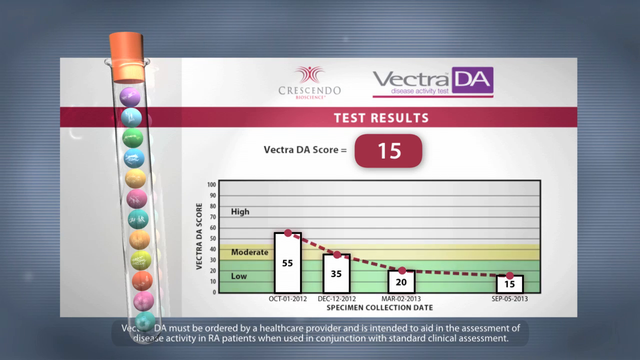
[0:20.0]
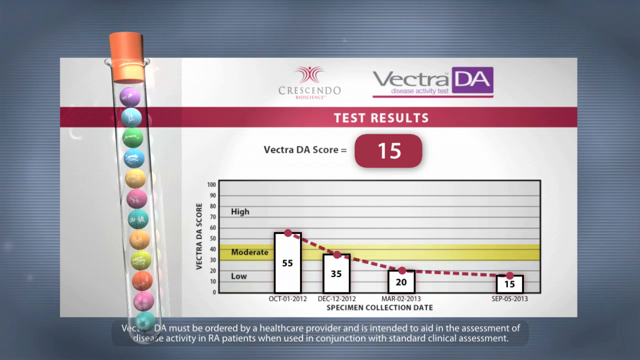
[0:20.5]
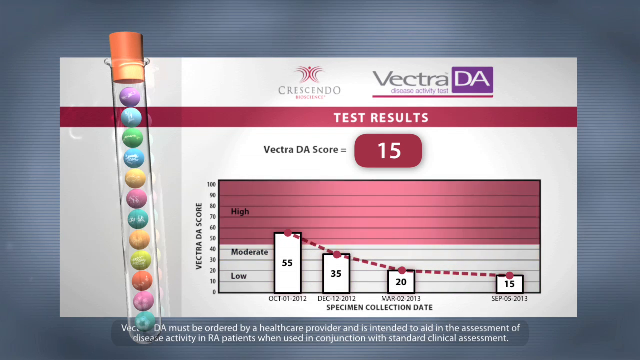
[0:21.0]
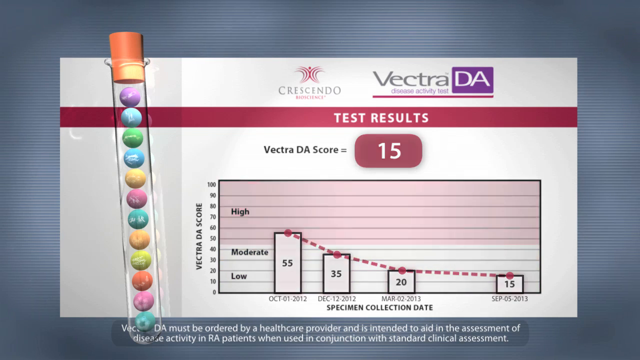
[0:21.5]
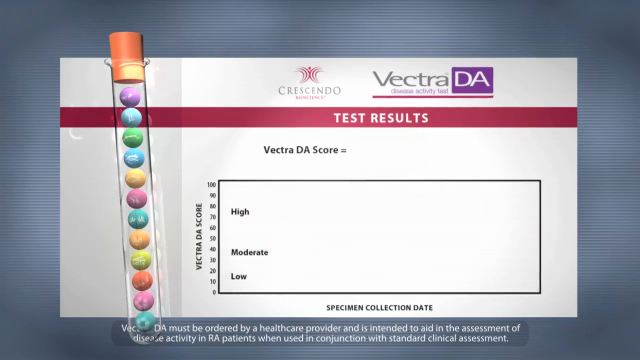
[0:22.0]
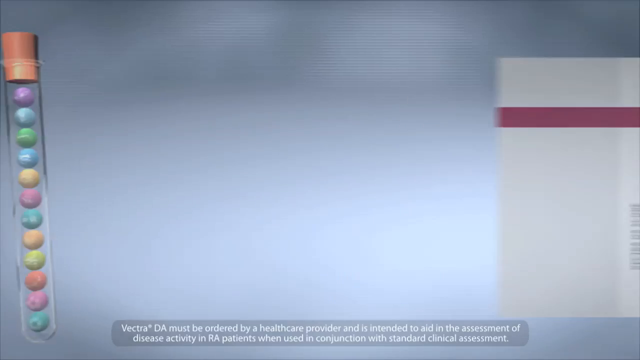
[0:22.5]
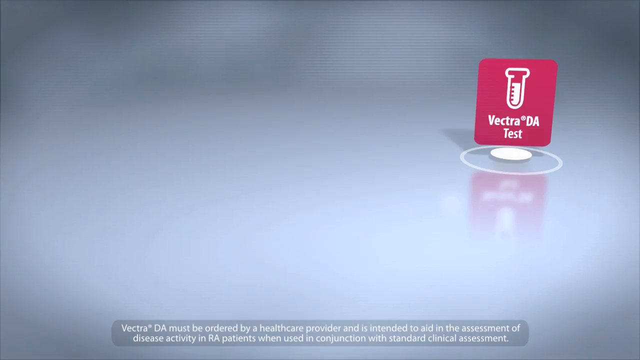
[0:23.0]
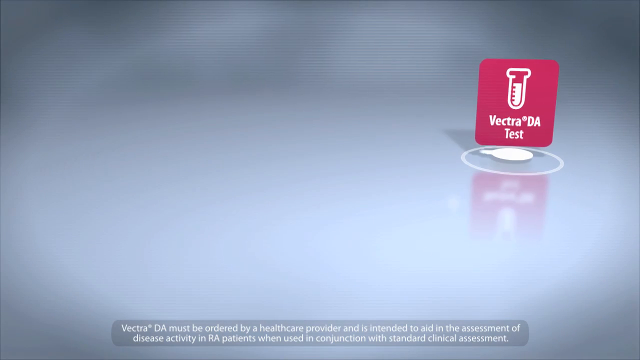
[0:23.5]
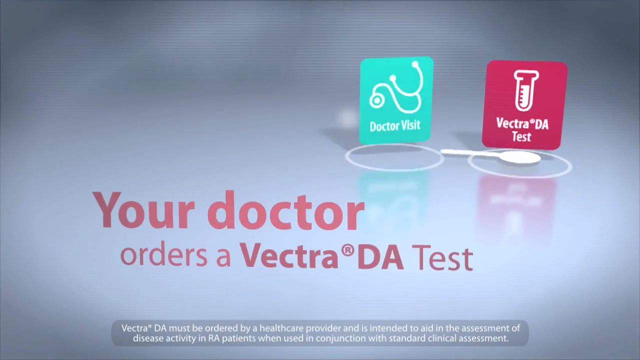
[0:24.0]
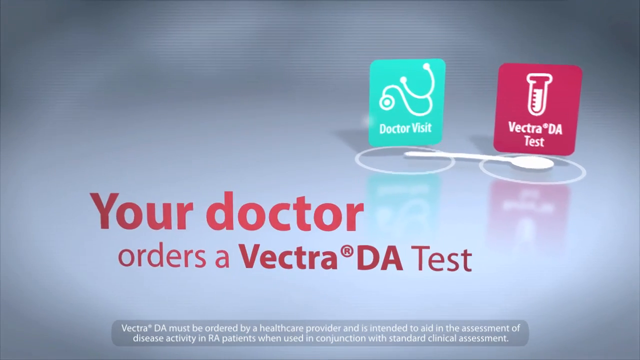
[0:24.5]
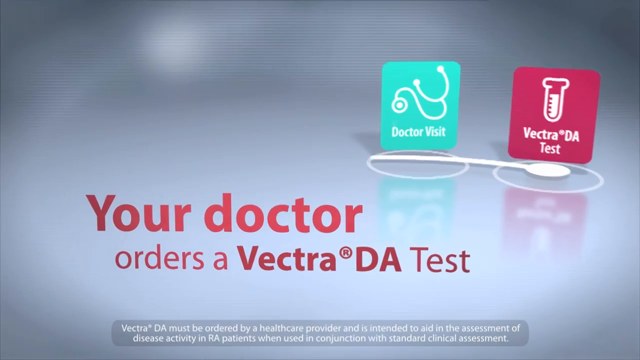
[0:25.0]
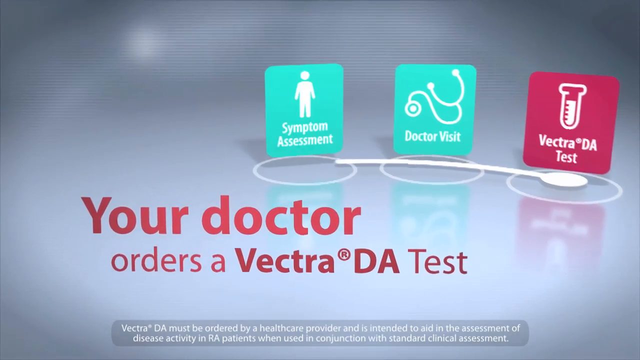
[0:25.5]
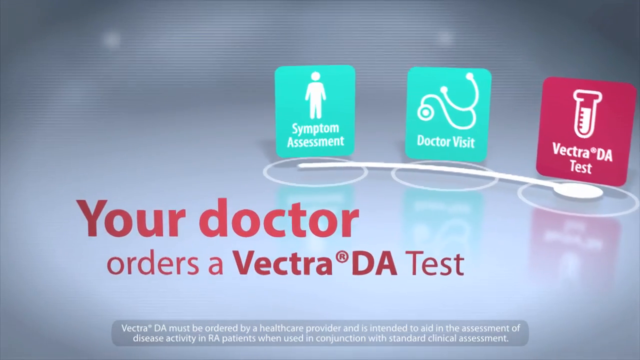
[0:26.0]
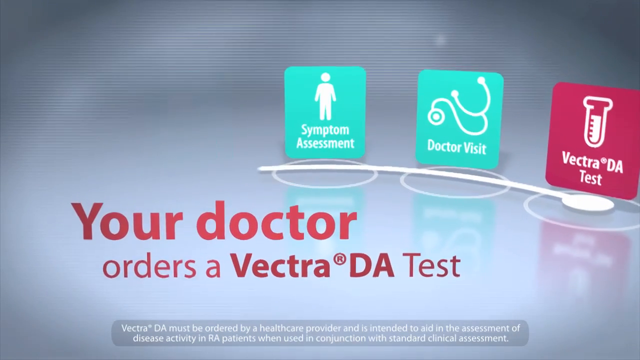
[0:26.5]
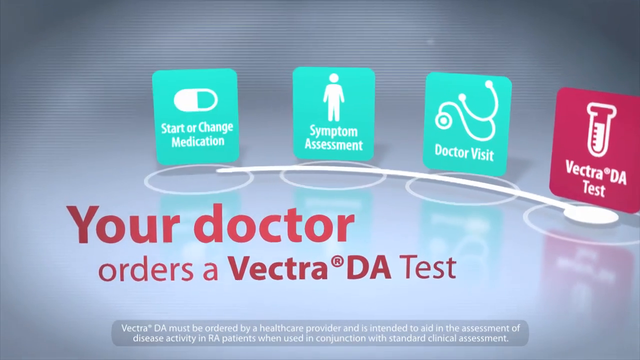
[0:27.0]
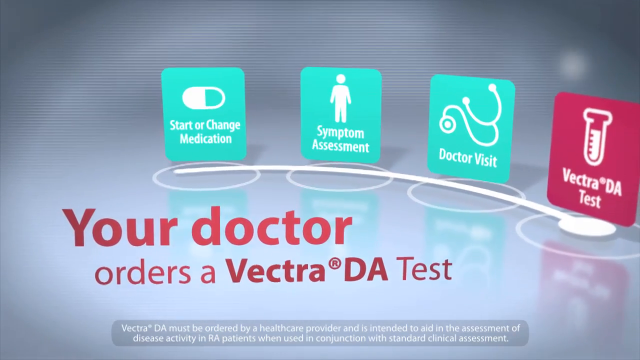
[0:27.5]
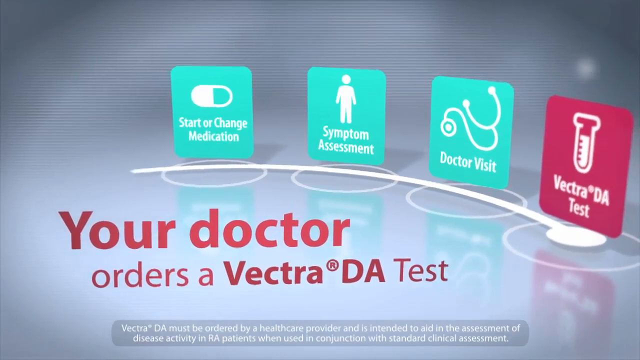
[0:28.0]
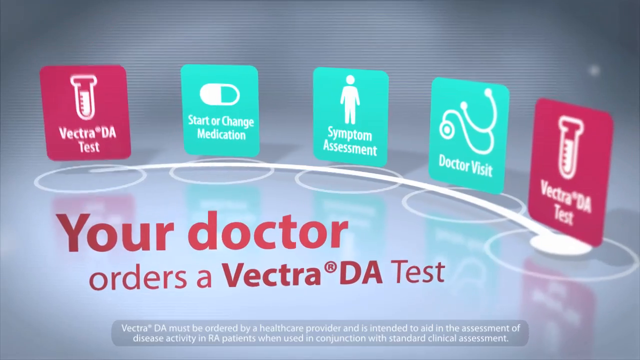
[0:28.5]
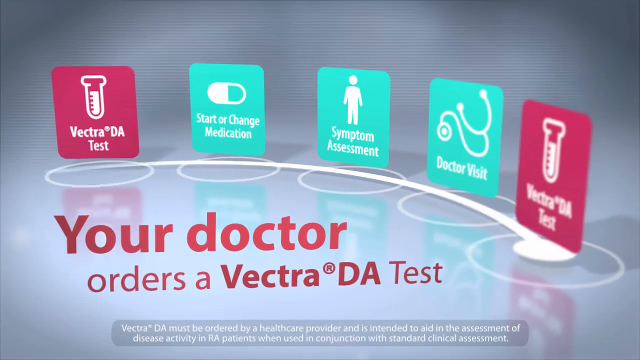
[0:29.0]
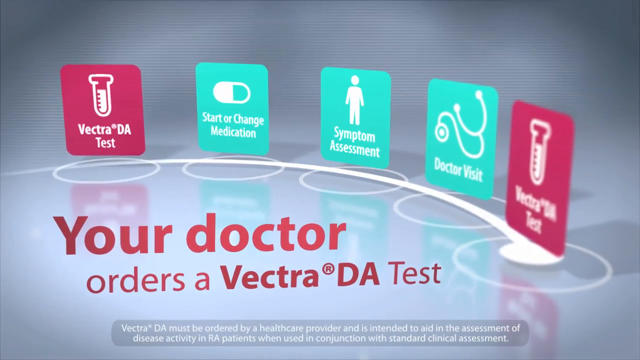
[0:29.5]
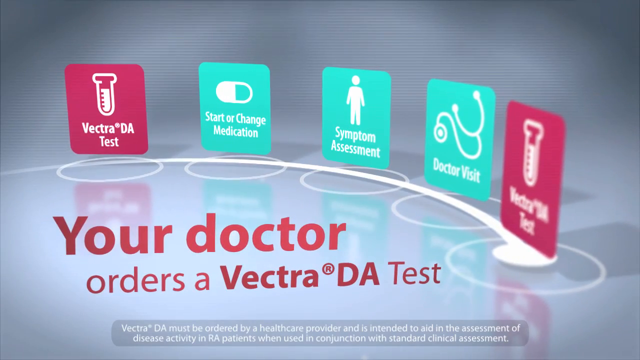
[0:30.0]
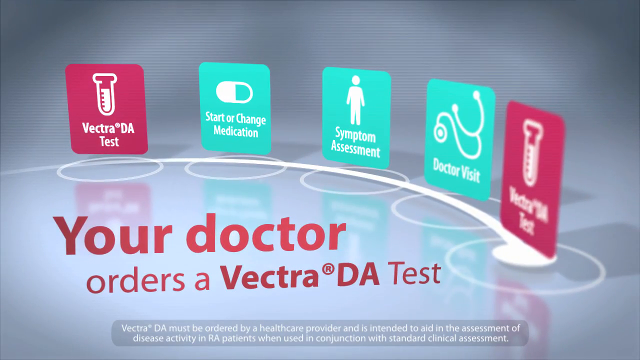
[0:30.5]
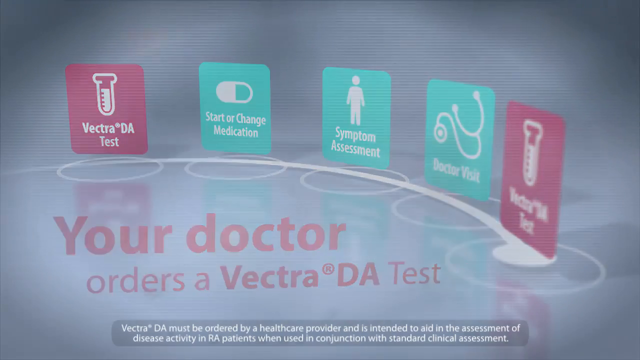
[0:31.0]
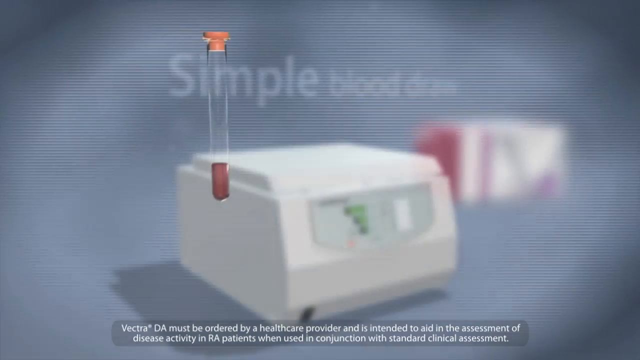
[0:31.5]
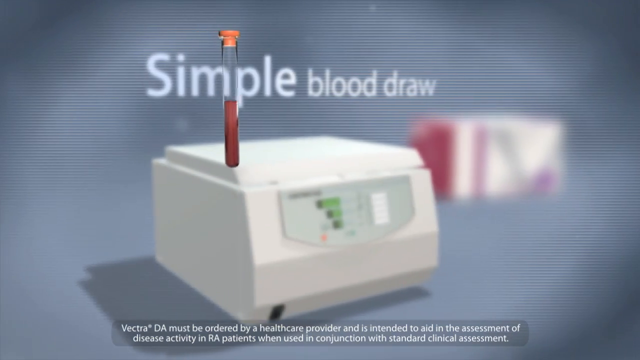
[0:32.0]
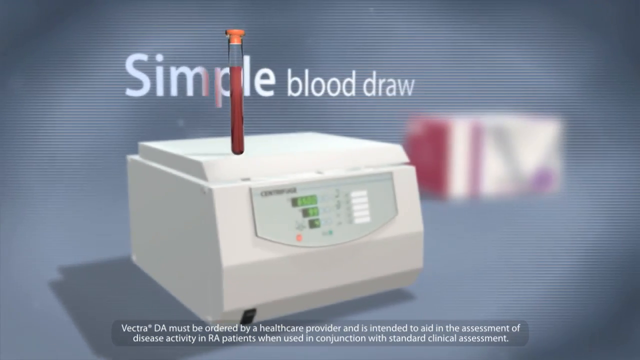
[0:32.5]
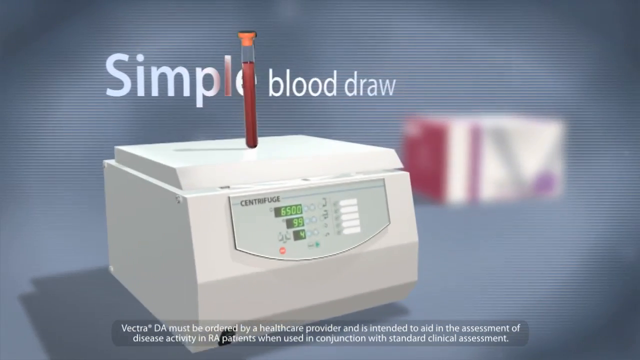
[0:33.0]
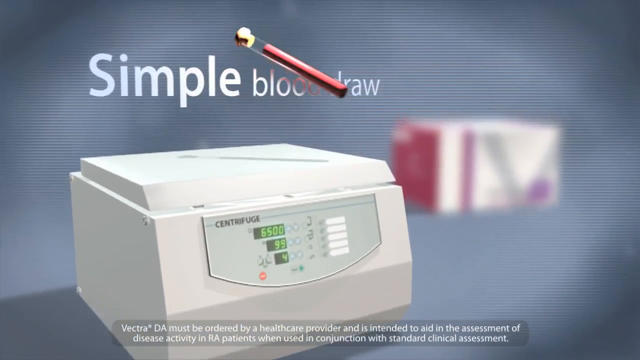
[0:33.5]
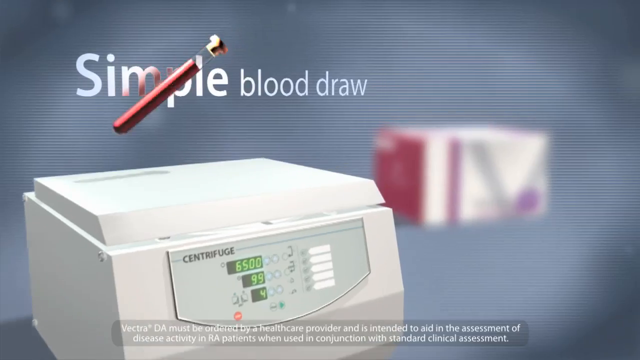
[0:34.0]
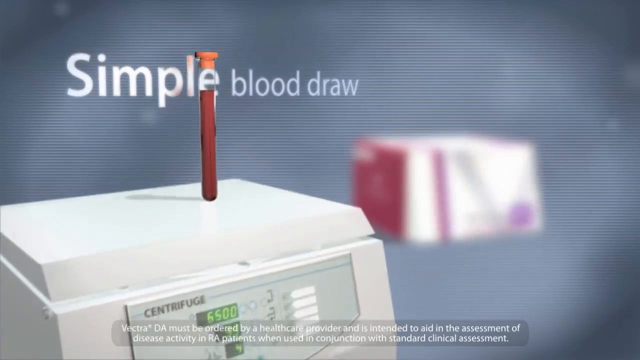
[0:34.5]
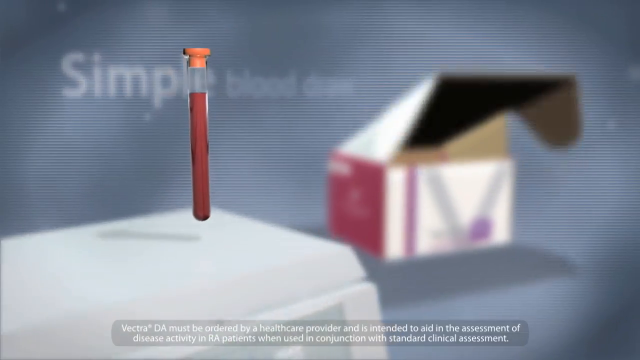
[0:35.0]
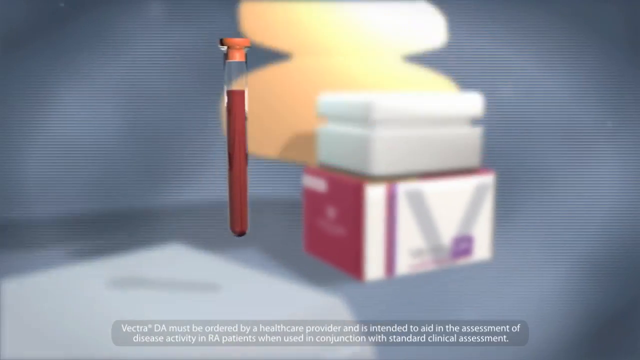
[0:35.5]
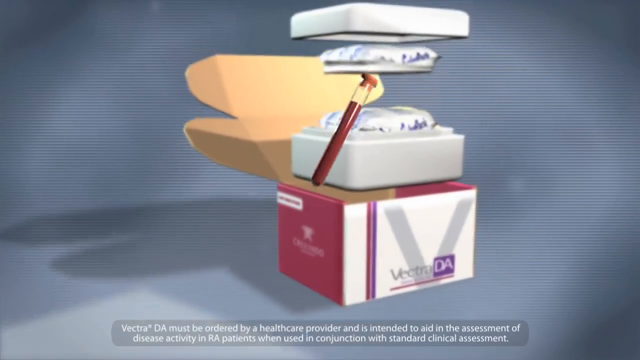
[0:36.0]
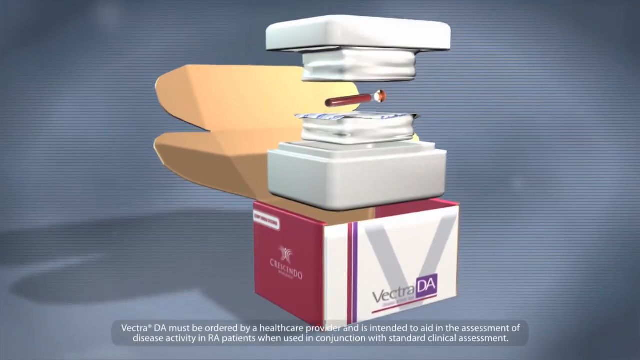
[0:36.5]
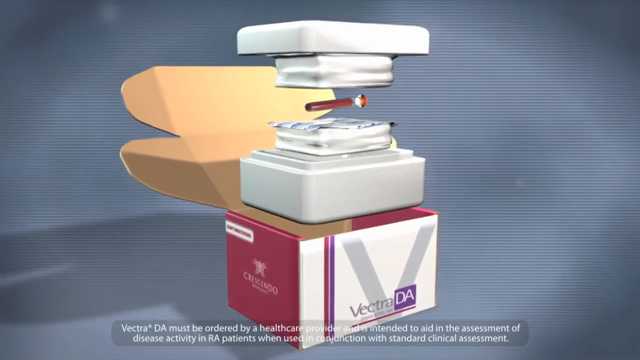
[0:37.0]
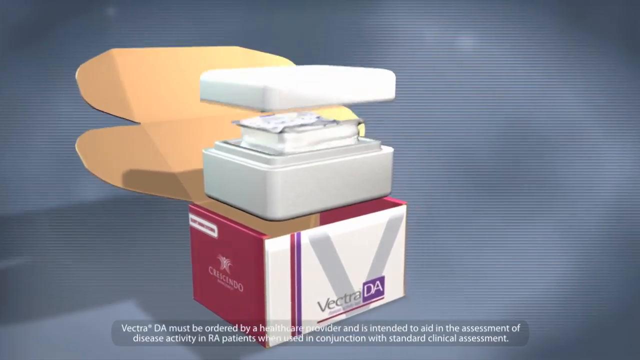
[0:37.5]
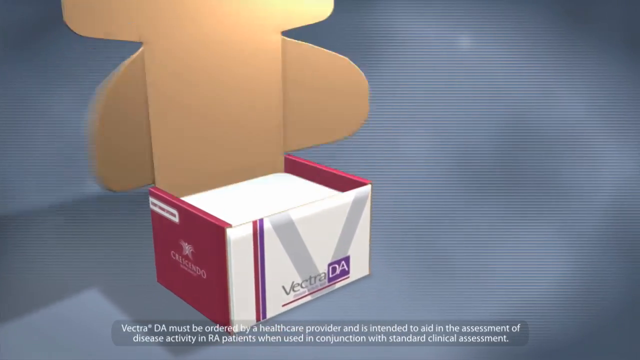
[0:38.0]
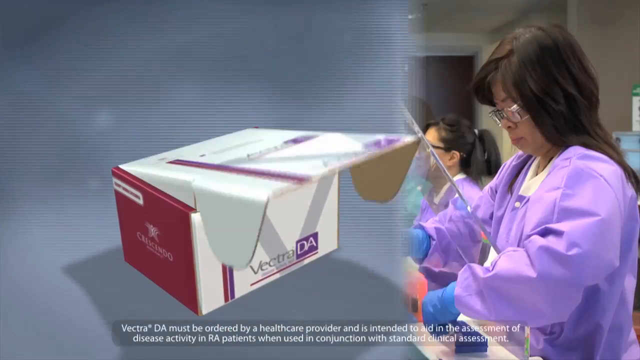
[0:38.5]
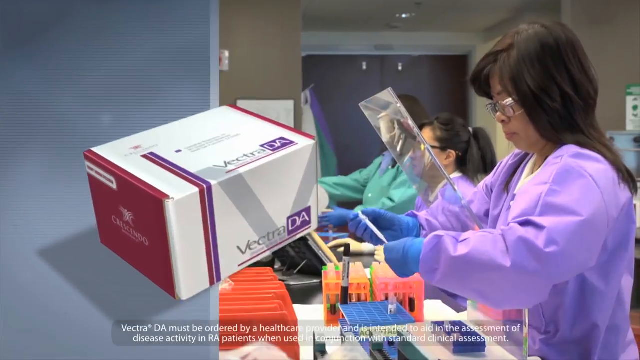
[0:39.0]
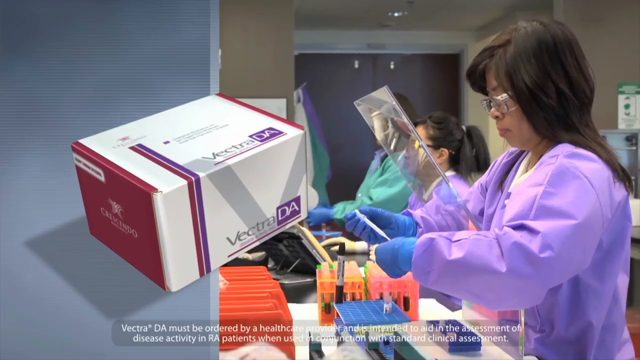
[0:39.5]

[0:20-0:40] A Crescendo screen shows text reading "test results, Vectra DA score 15" and a graph labeled "Vectra DA score" with the text "high," "moderate" and "low." A banner or box lists October 1st, 2012, 55; December 12th, 2012, 35; March 2nd, 2013, 20; and September 5th, 2013, 15. Low is green, moderate is yellow and high is red, and the dates are labeled "specimen collection date." Text reads "Vectra DA must be ordered by a healthcare provider and is intended to aid in the assessment of disease activity in RA patients when used in conjunction with standard clinical assessment." A glass tube with an orange plug at the top contains what look like pills or M&Ms in purple, blue, green, pink, teal and other colors. The screen then transitions to a gray background with red text reading "your doctor orders a Vectra DA test." A teal and red box reads "doctor visit" and "Vectra DA test," with a very large spoon kind of connecting past the boxes. Another box pops up reading "symptom assessments," "start or change medication" and "Vectra DA test." Next, a vial fills with blood beside white text reading "simple blood draw." The vial kind of spins around, a box opens, the vial is placed inside, and the box is closed. A woman in a lab is putting liquid in something.